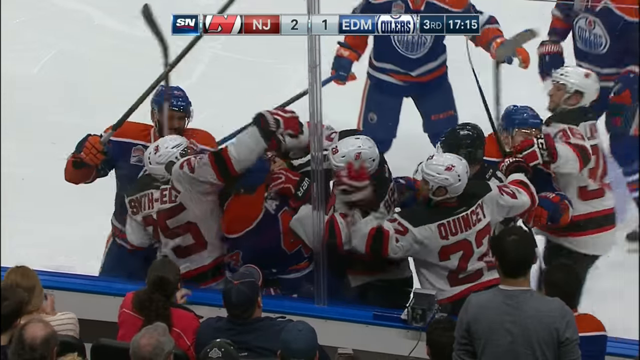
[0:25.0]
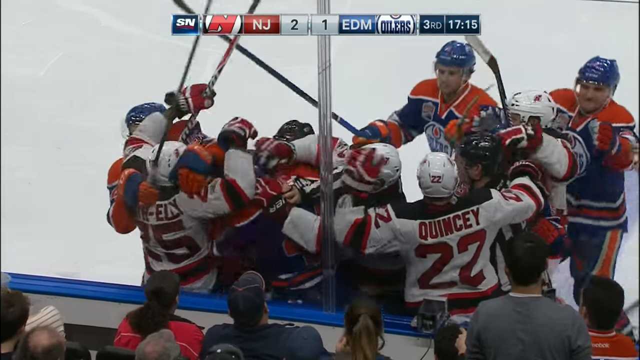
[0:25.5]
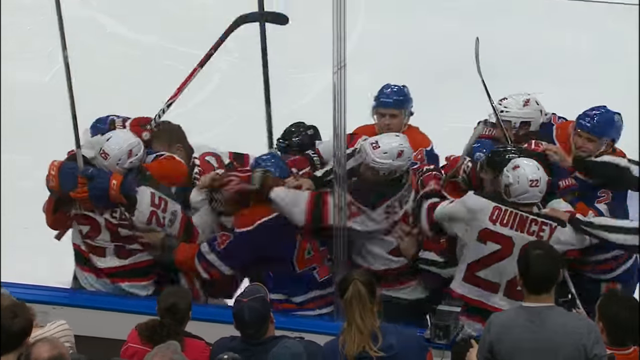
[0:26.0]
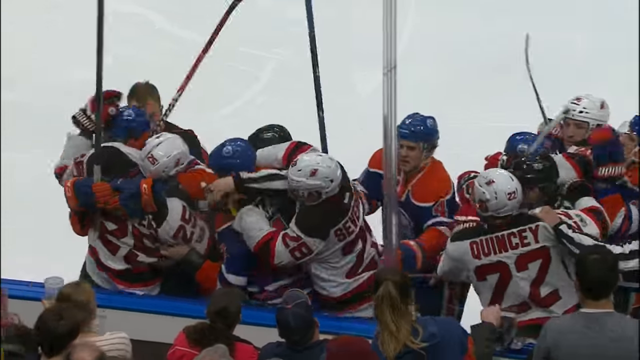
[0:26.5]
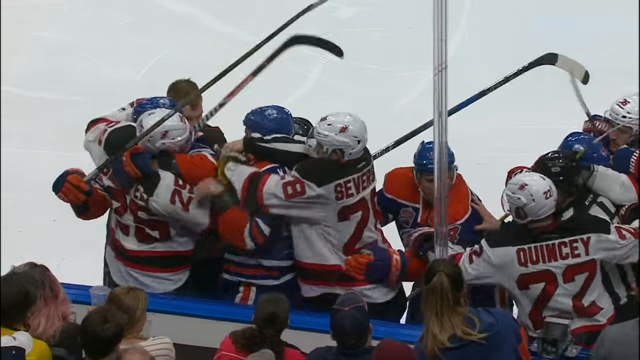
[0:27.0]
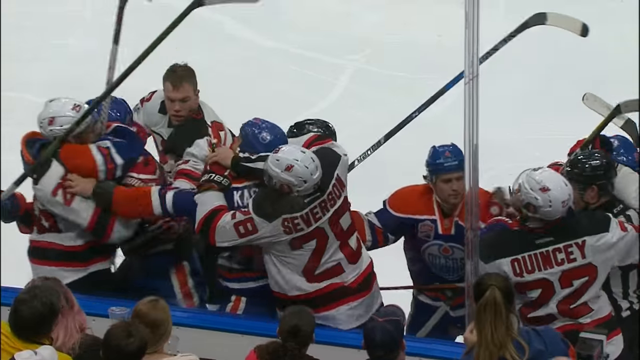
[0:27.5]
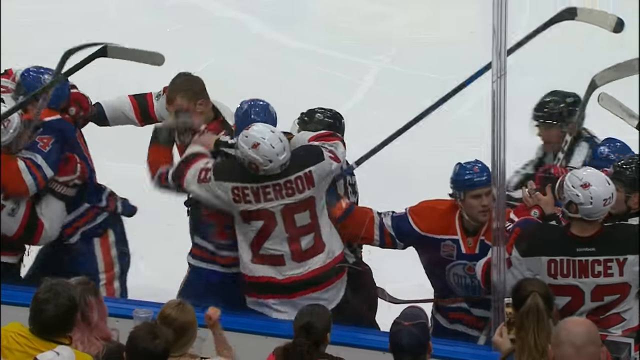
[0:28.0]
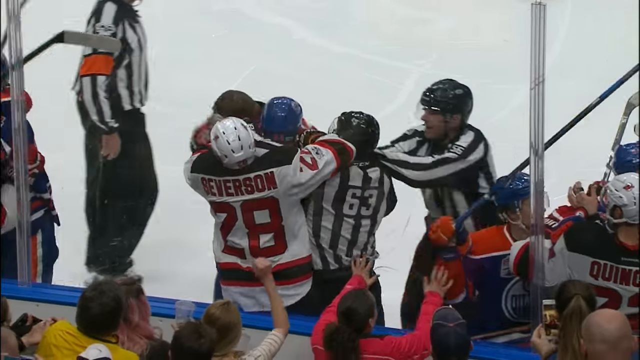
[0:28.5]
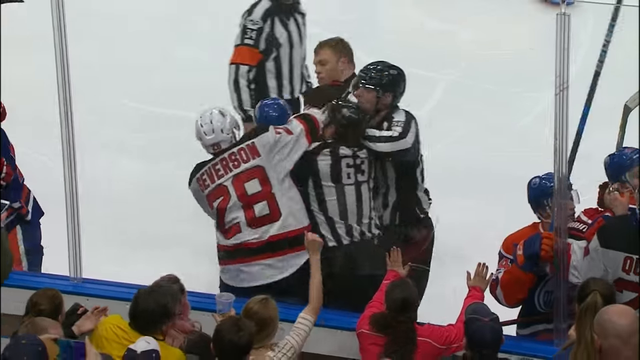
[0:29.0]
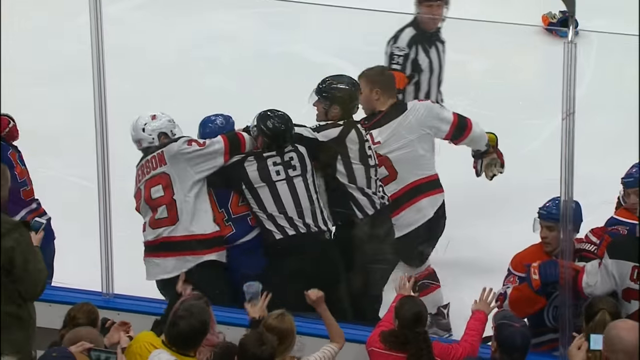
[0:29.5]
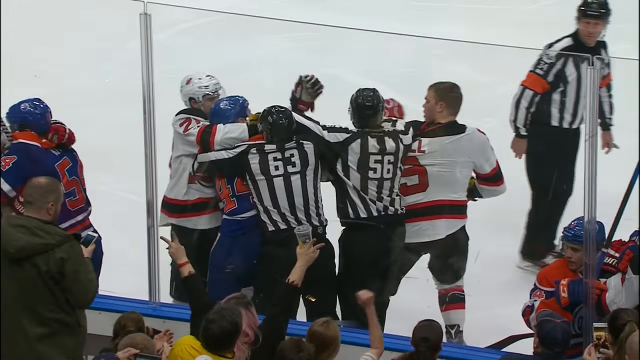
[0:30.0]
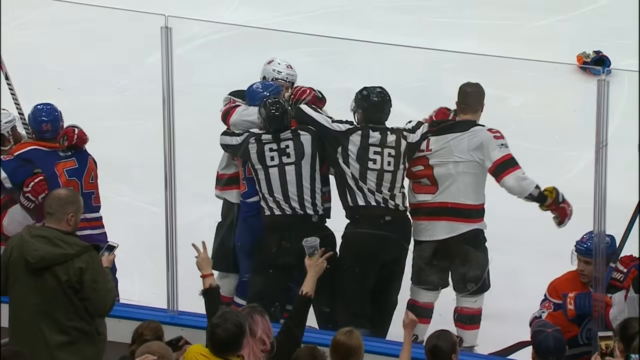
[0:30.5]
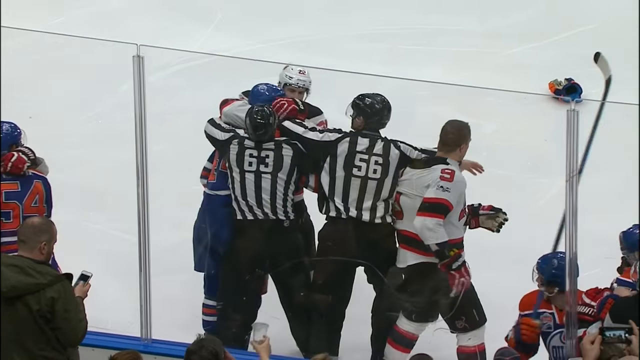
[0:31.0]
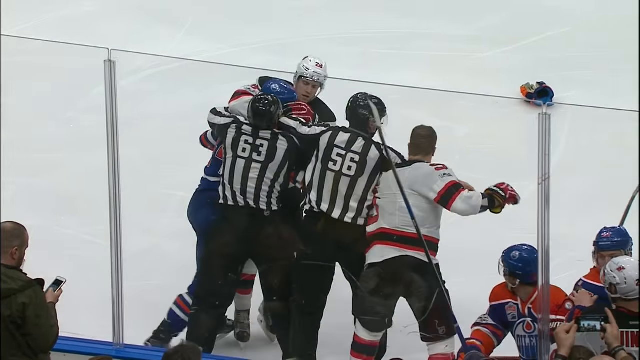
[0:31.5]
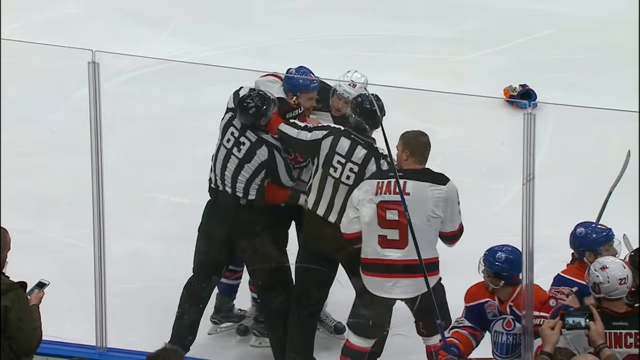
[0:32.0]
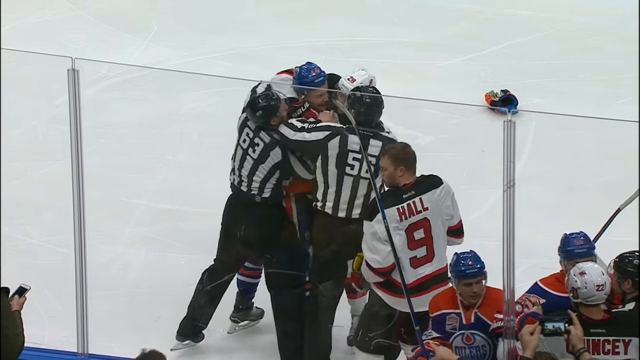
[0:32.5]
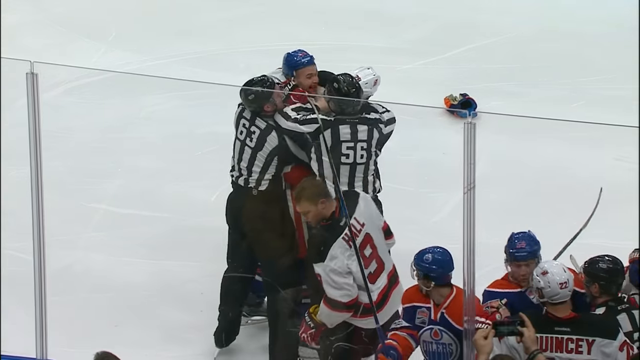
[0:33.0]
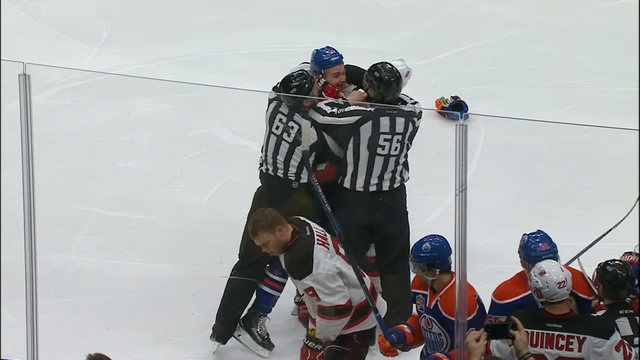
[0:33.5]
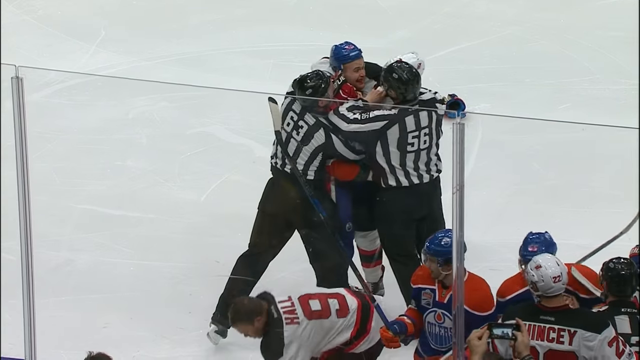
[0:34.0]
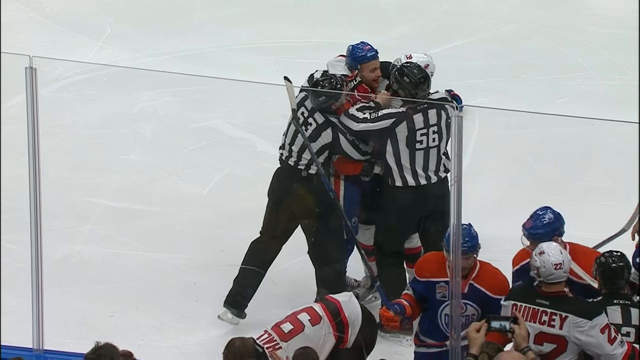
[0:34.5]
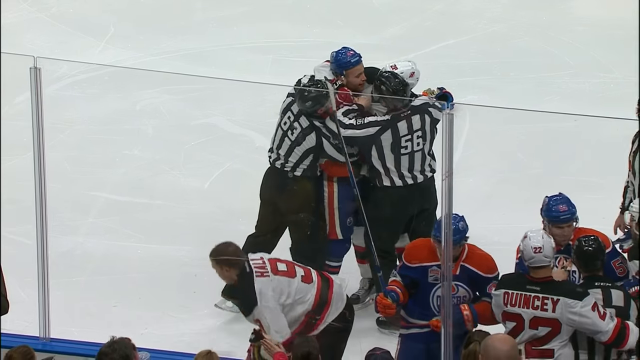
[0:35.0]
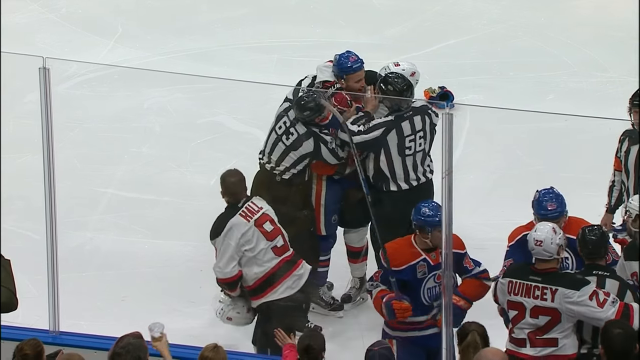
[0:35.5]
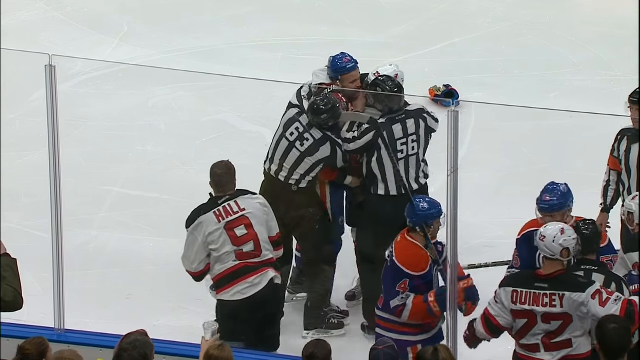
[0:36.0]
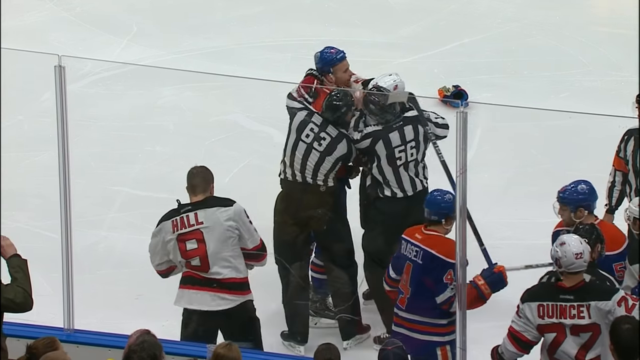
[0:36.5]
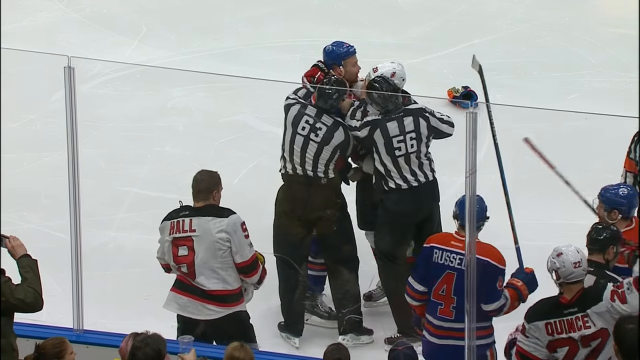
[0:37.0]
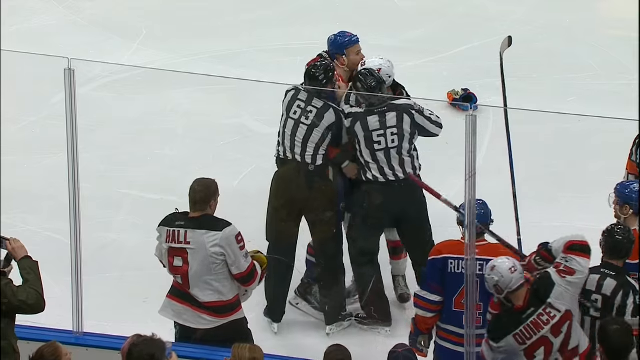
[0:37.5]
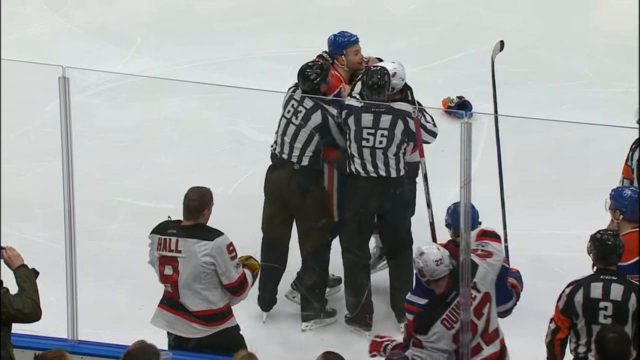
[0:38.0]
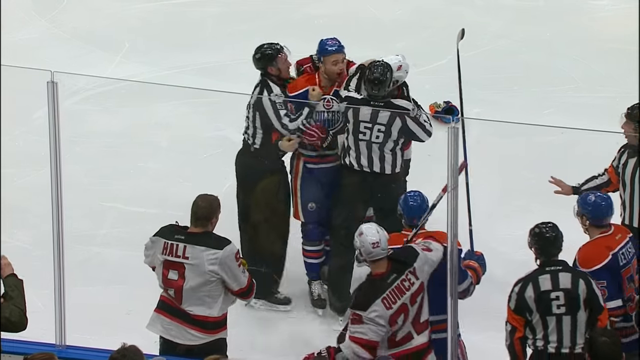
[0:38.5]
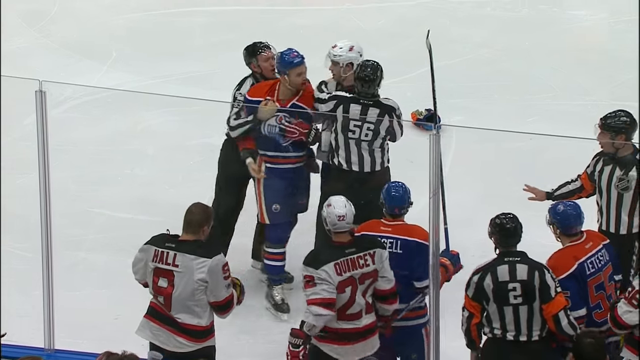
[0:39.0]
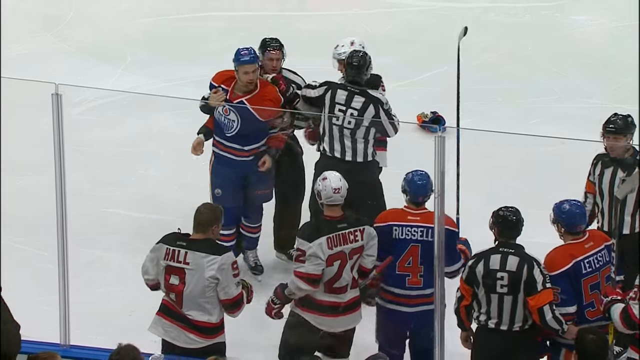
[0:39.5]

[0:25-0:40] The video continues to emphasize that Cassian wants revenge. He looks like the captain. The referees can barely hold him down and break up the fight. The Oilers captain is shown in the box, and a crowd is watching.